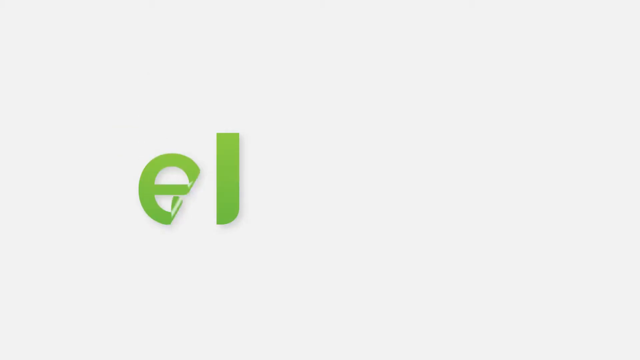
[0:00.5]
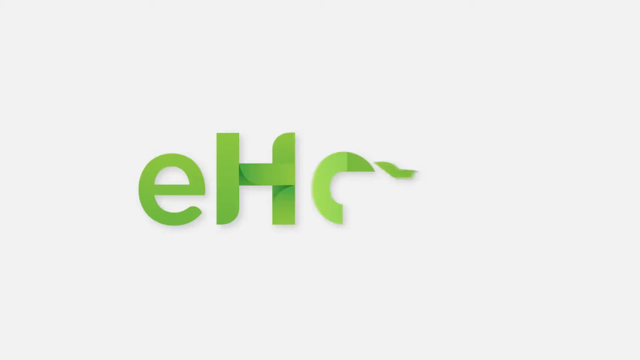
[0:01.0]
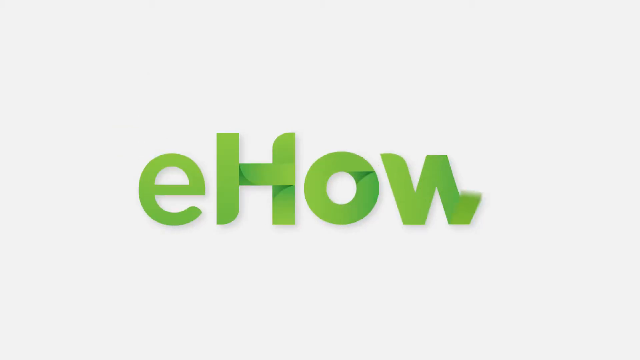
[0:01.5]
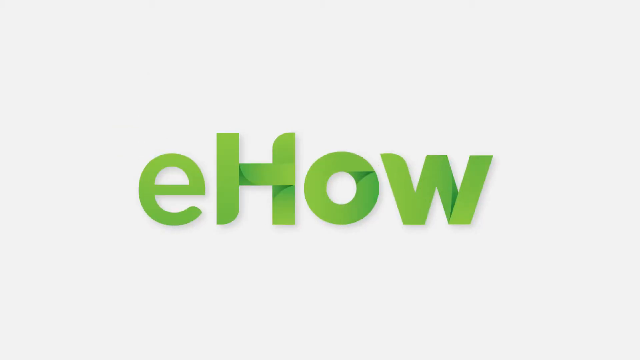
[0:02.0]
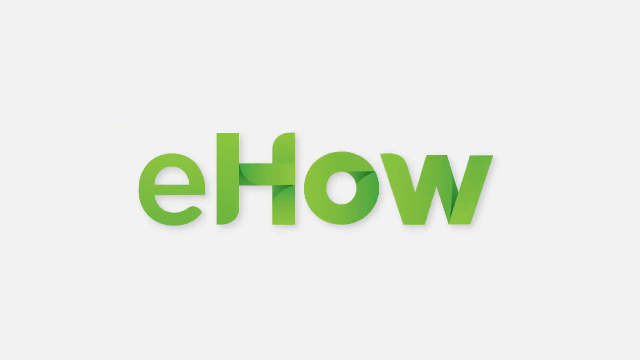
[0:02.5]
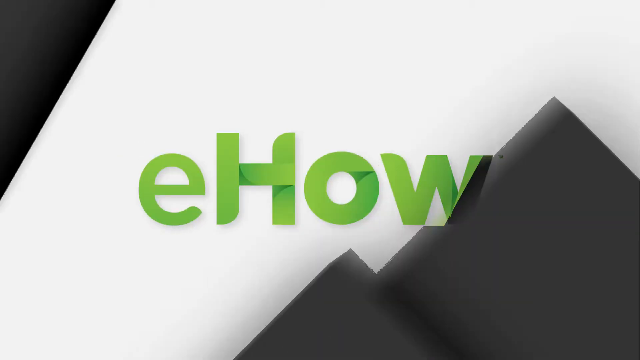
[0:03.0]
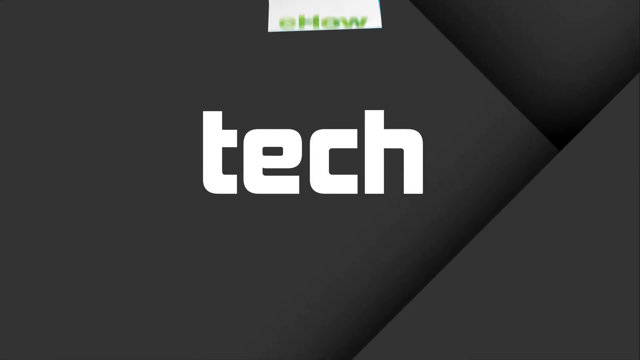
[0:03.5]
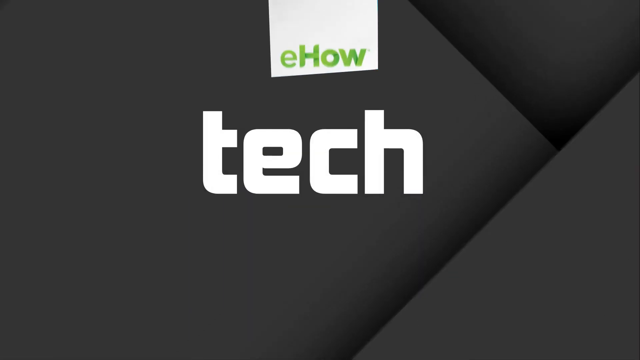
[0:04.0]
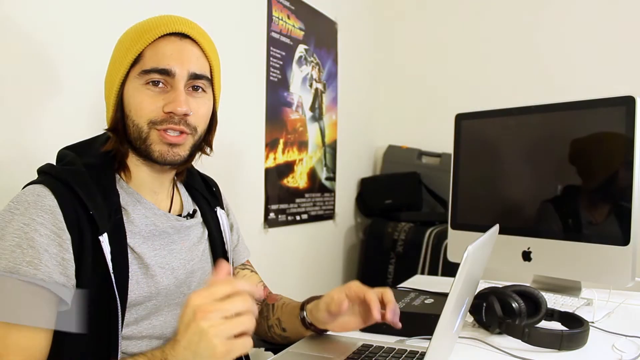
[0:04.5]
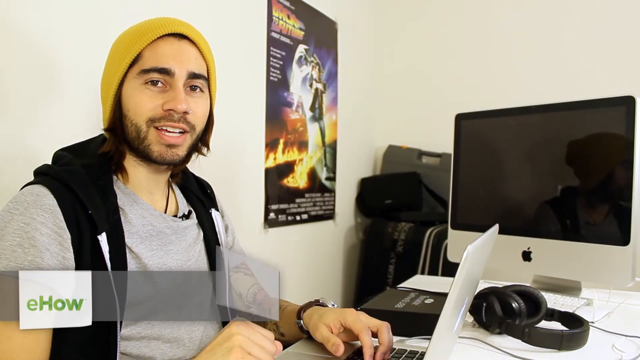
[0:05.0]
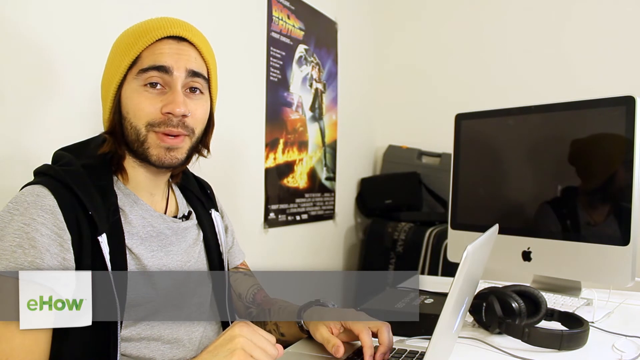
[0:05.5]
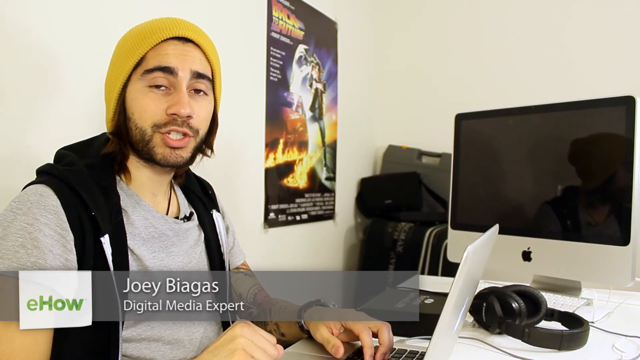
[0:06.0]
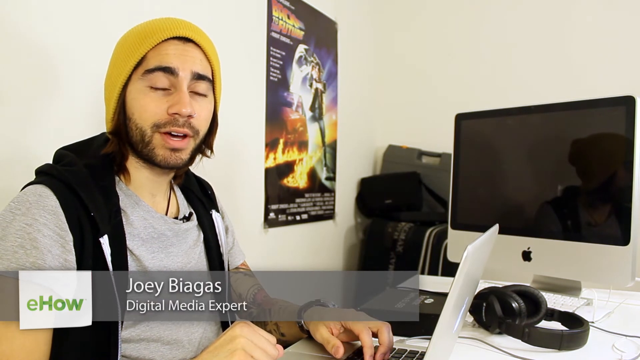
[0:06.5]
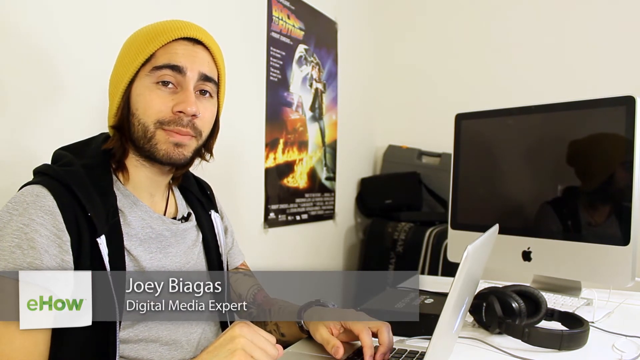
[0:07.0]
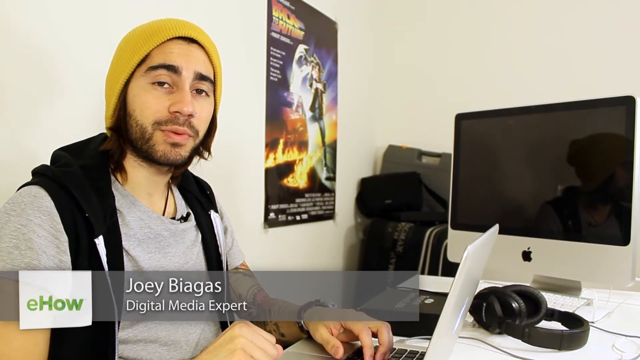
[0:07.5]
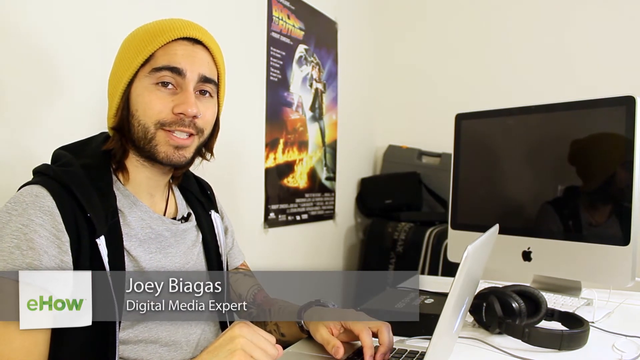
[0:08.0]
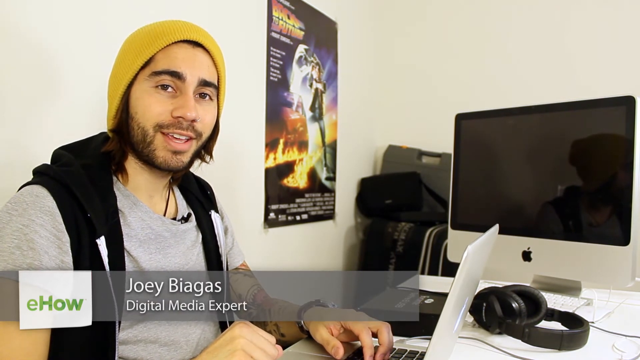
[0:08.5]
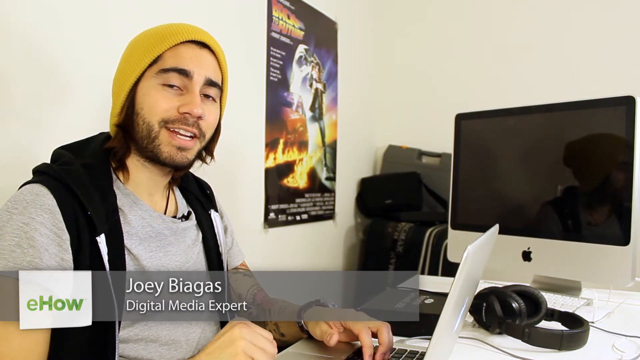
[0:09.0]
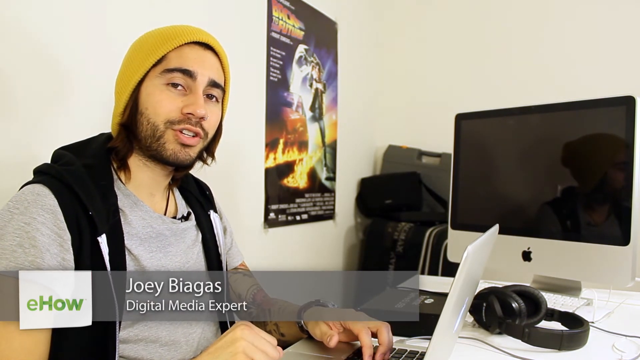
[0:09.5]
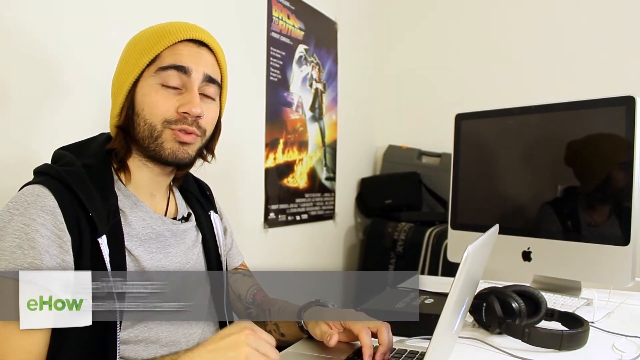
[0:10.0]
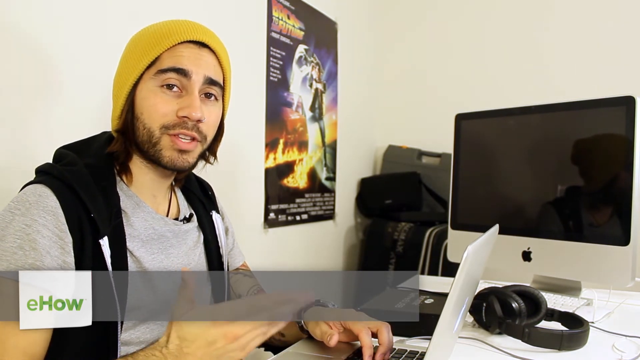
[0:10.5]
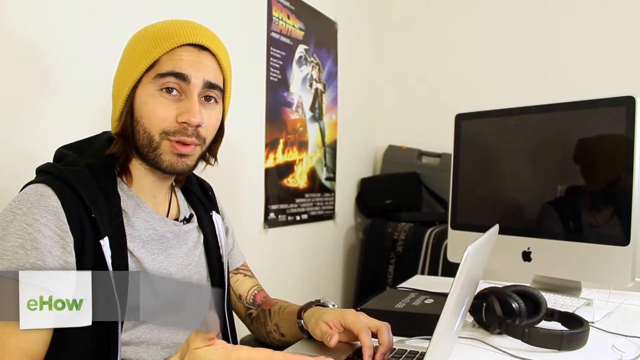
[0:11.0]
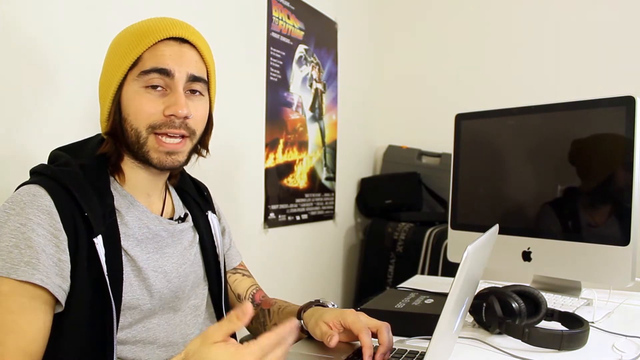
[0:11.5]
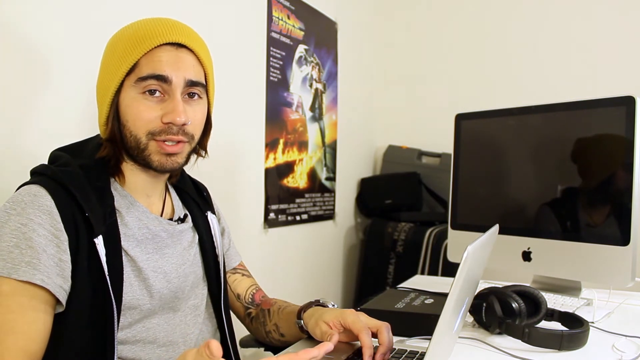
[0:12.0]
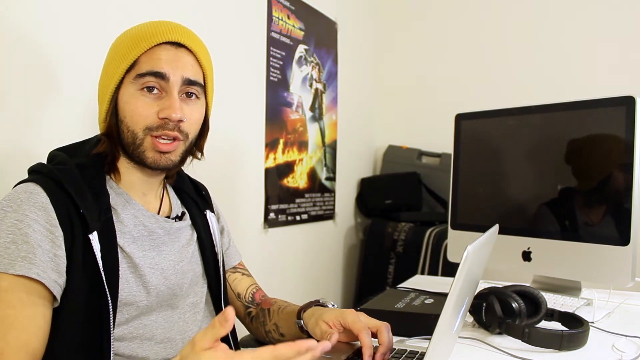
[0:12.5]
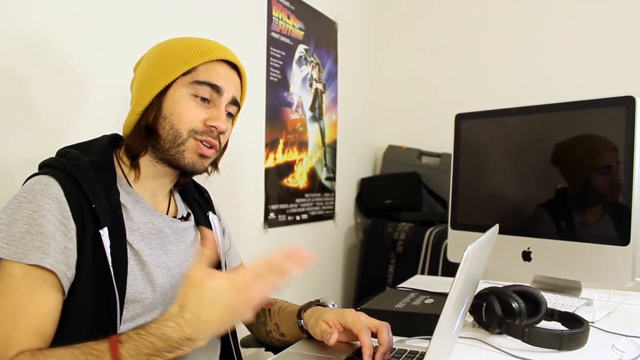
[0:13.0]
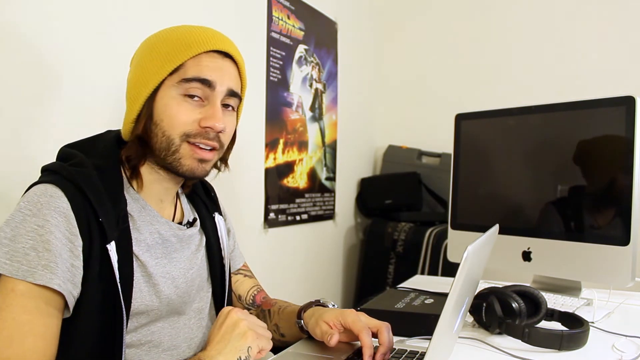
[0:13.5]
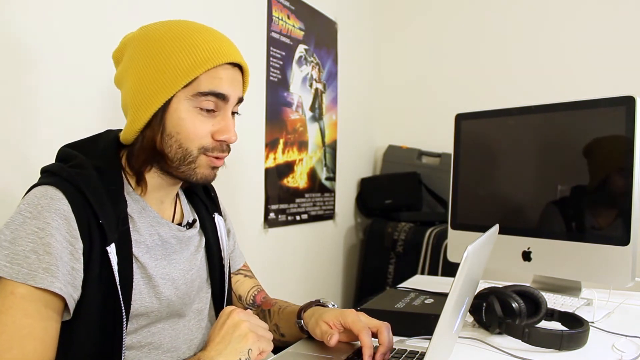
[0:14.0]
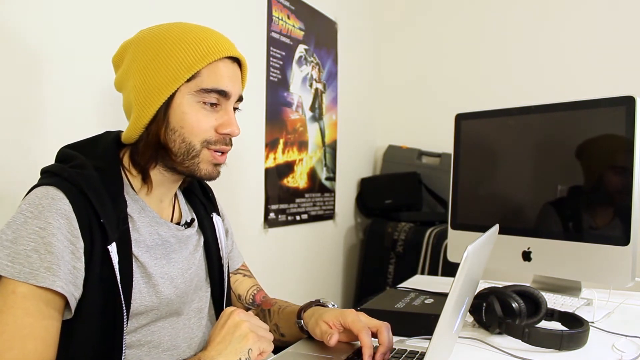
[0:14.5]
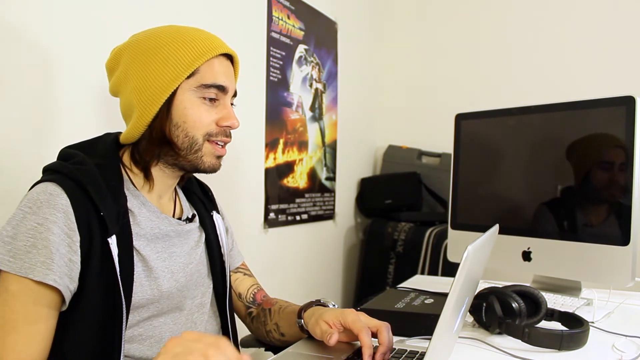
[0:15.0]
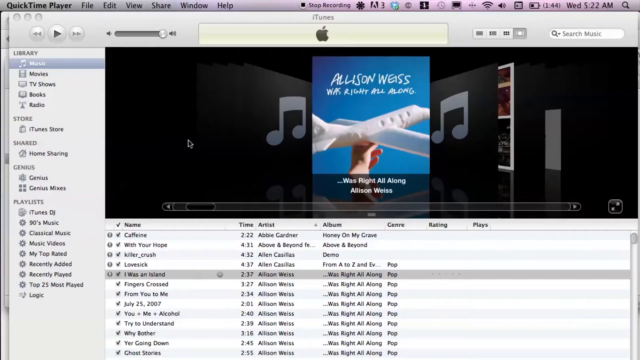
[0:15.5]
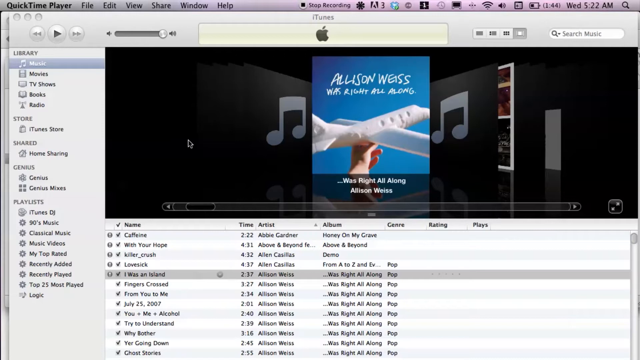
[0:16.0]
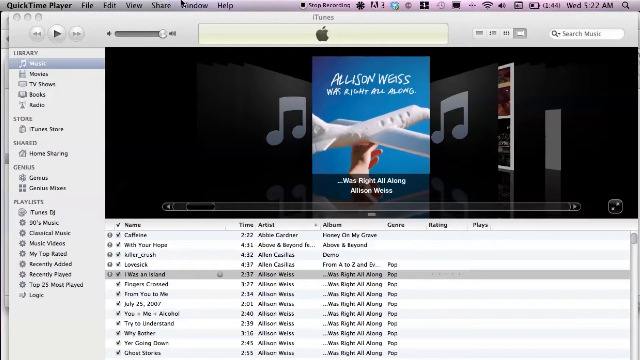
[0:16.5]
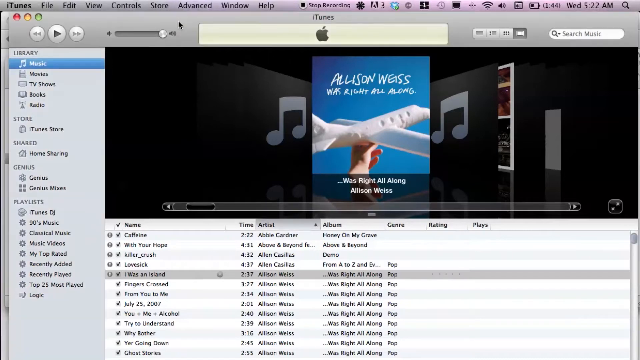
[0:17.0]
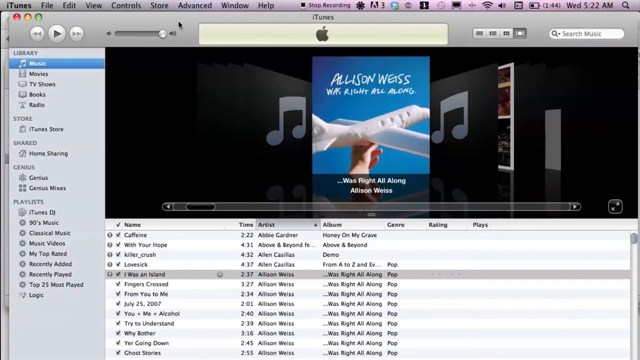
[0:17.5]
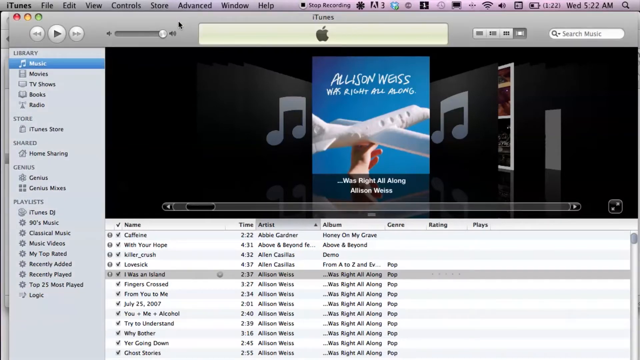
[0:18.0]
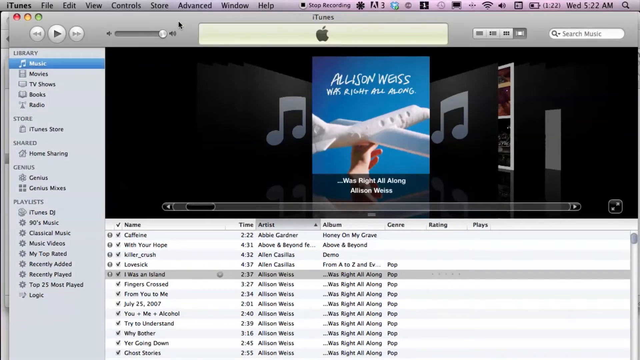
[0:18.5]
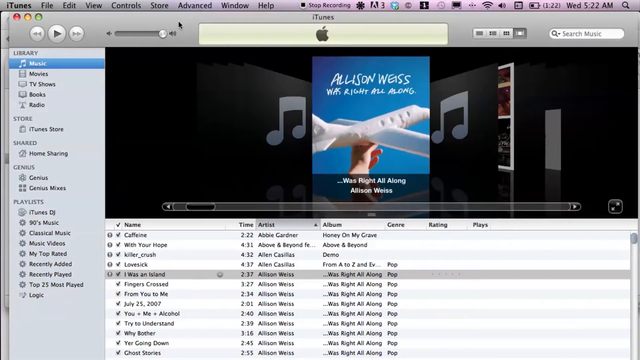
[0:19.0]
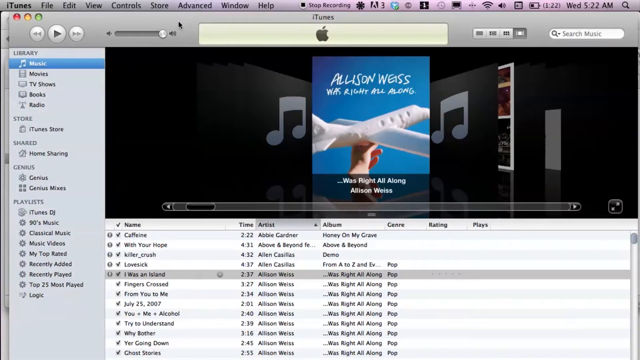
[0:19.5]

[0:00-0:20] The eHow video opens with the green and white eHow logo flipping in across the screen from left to right. Another title card pops up indicating that it is a tech video. The scene then flashes to a man named Joey Biagas, apparently a digital media expert, who talks directly to the camera. He is positioned on the left-hand side of the frame; on the right-hand side is an Apple monitor, and in the middle is a Back to the Future poster. He talks to the camera quite animatedly, gesturing with his left hand. The view then changes to a screen showing iTunes, apparently the player section. The selected album is Allison Weiss's Was Right all along, and its individual tracks are visible on the screen below.